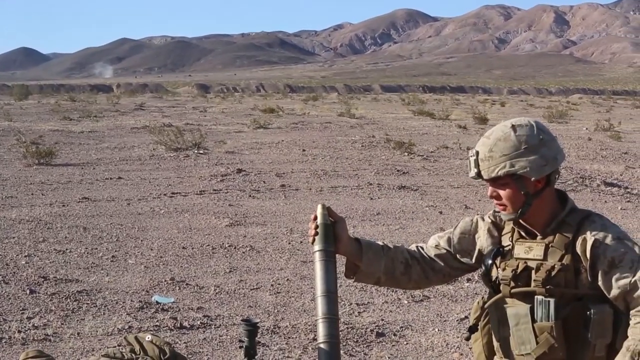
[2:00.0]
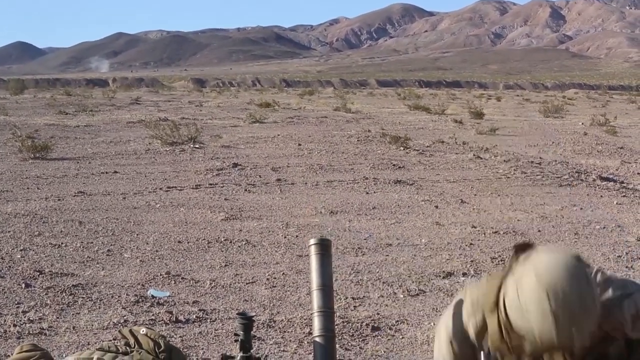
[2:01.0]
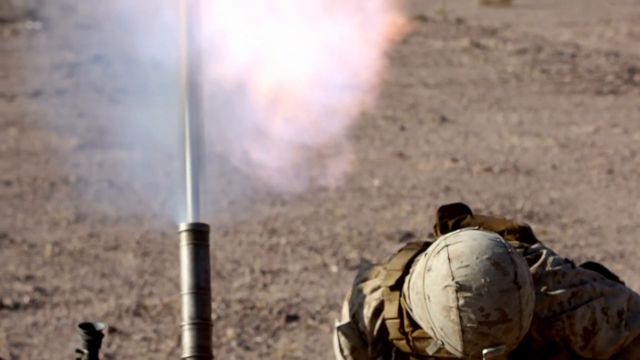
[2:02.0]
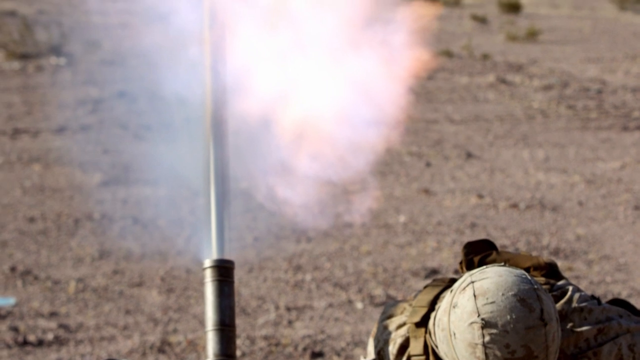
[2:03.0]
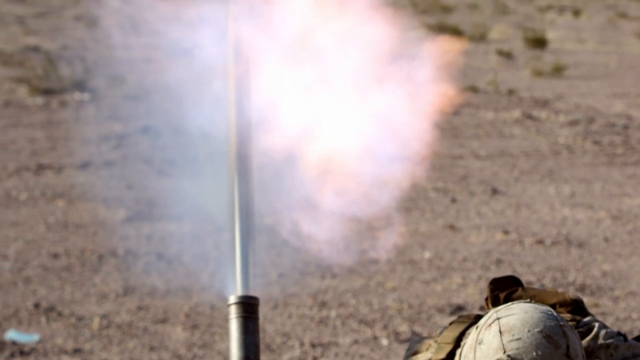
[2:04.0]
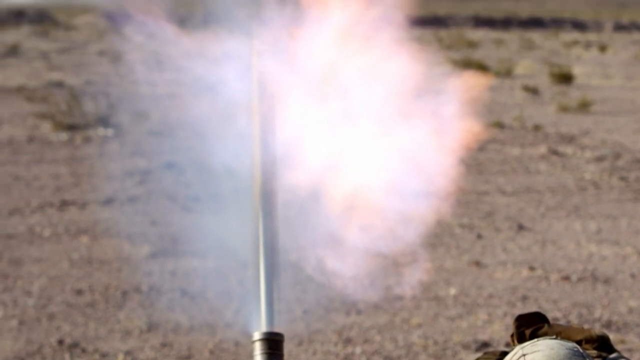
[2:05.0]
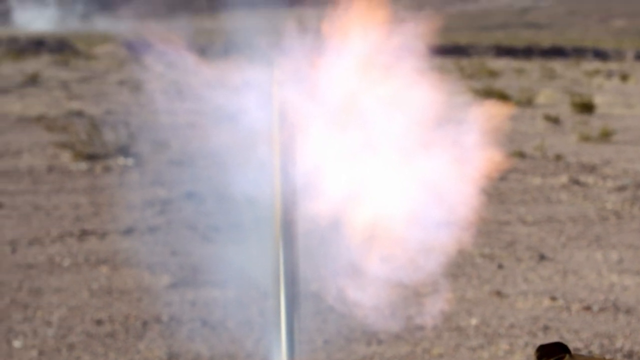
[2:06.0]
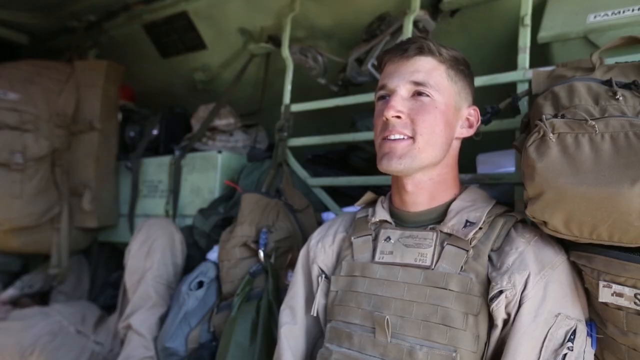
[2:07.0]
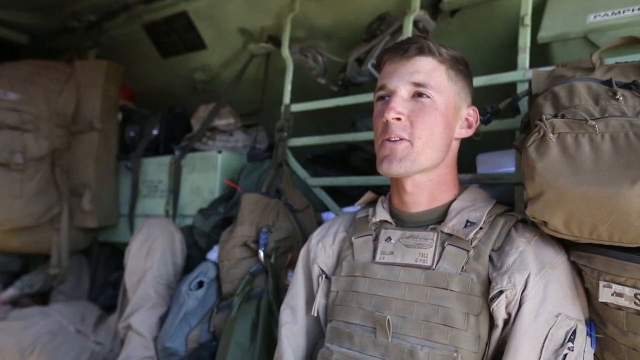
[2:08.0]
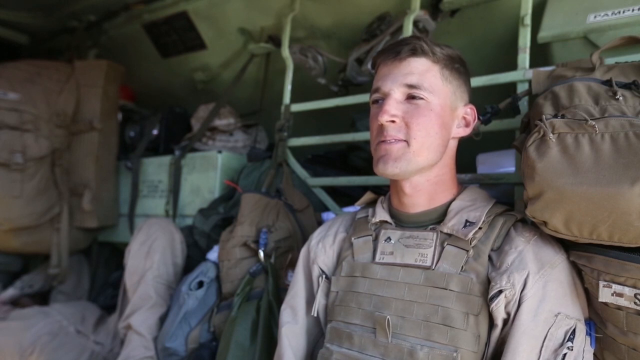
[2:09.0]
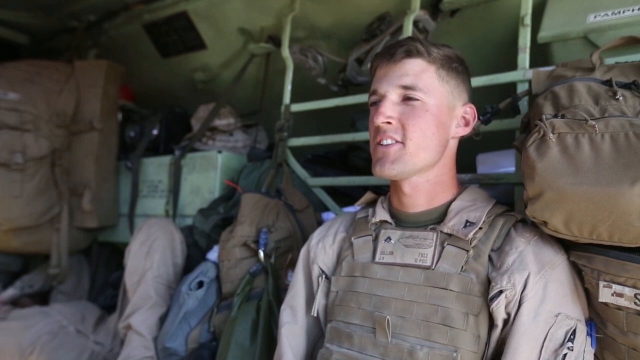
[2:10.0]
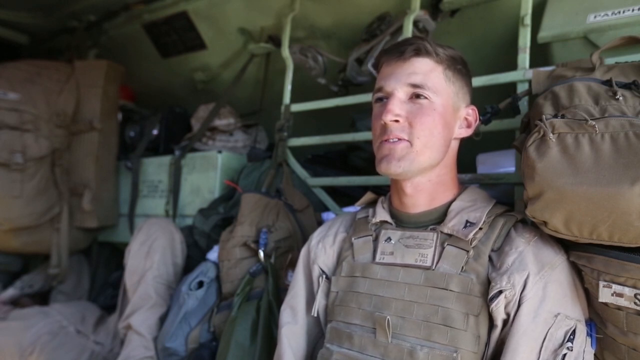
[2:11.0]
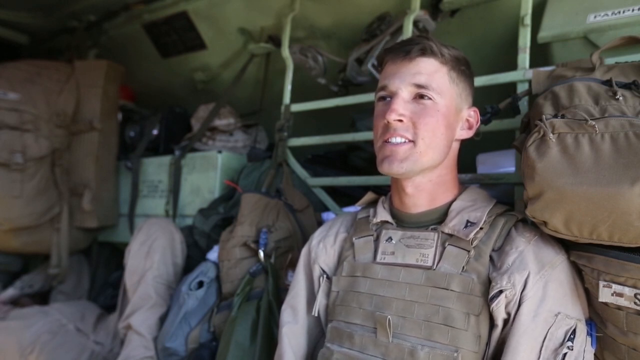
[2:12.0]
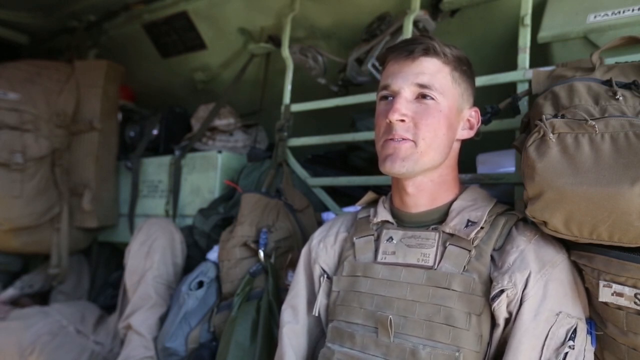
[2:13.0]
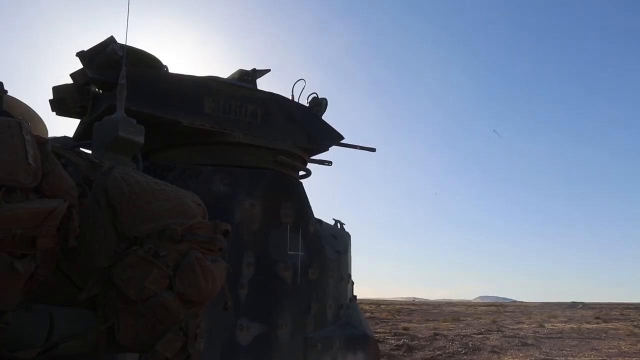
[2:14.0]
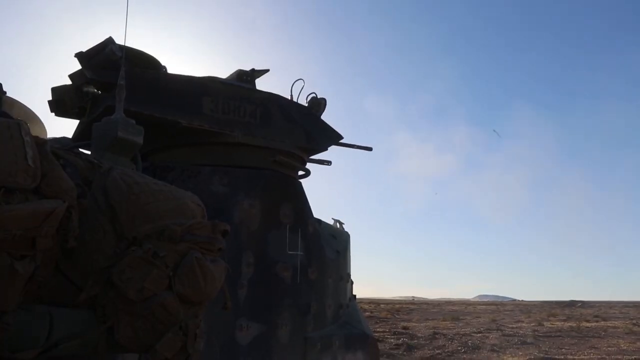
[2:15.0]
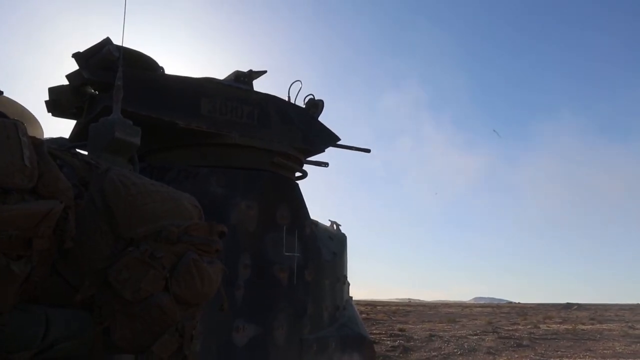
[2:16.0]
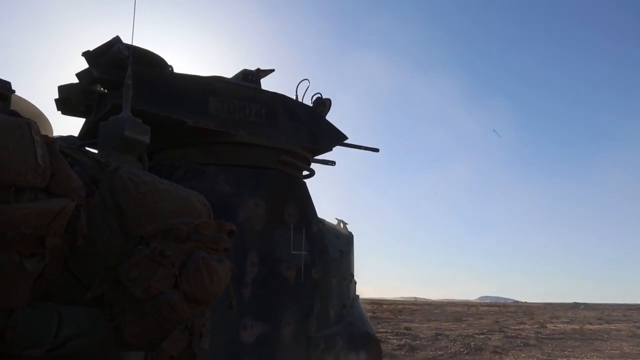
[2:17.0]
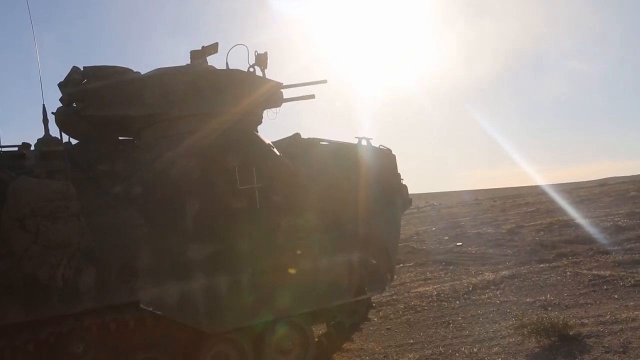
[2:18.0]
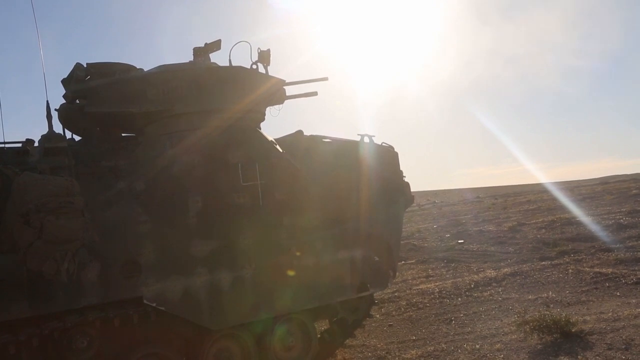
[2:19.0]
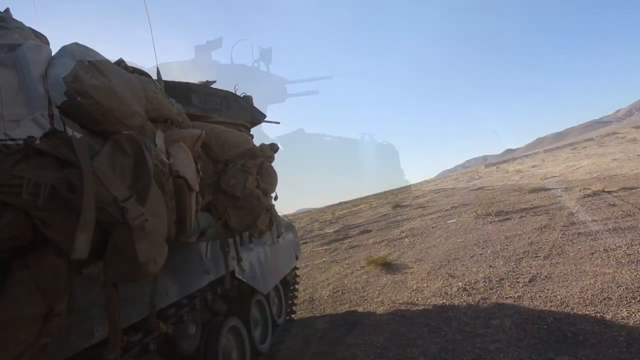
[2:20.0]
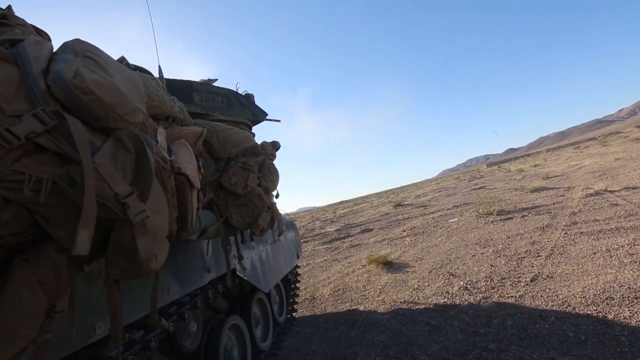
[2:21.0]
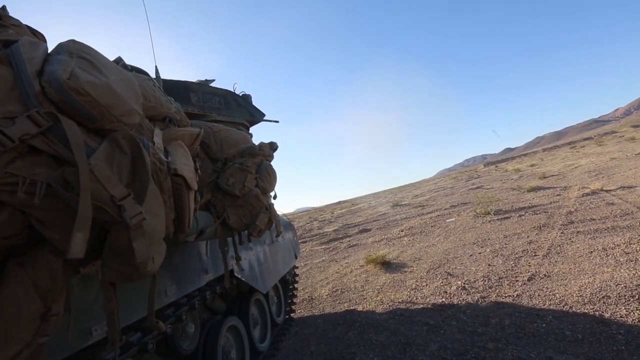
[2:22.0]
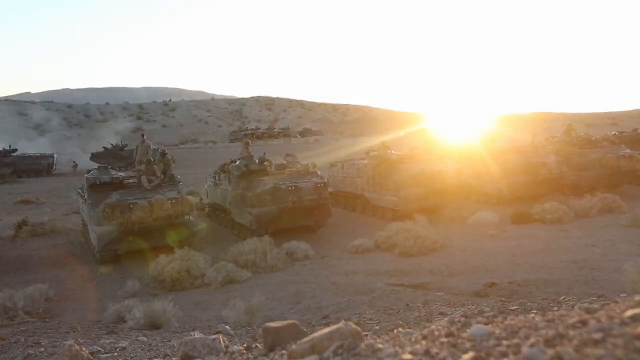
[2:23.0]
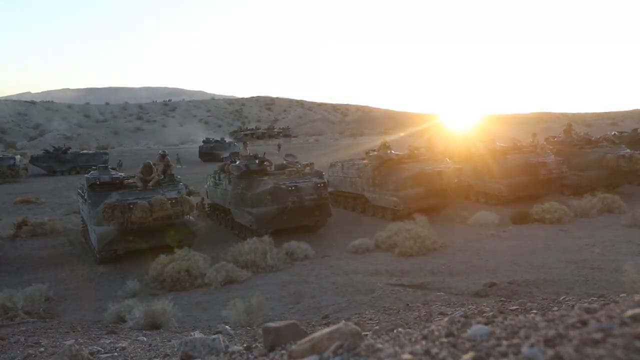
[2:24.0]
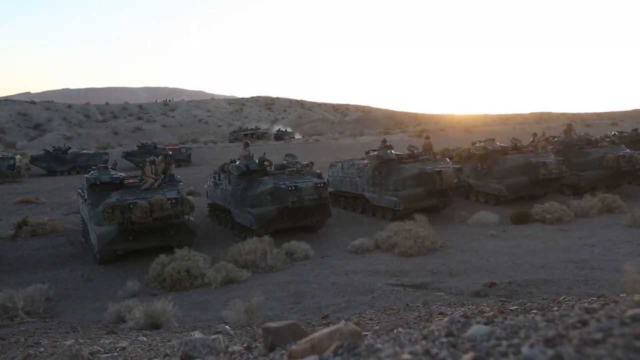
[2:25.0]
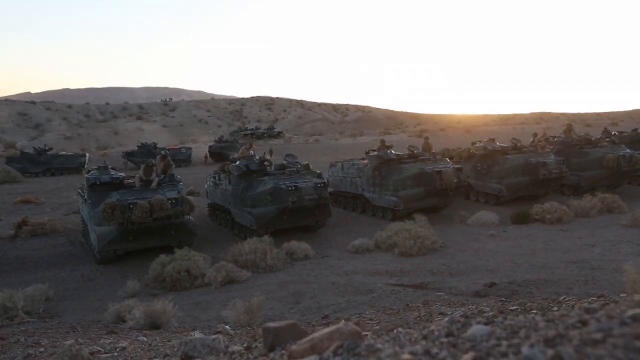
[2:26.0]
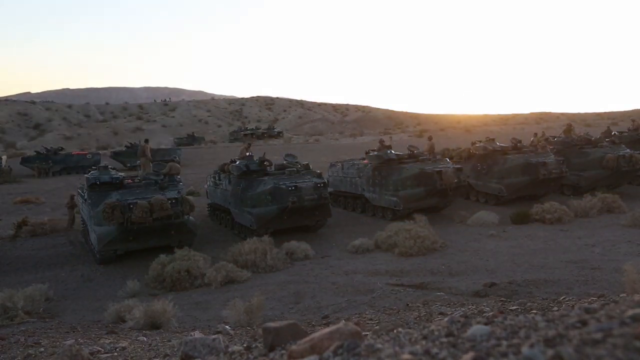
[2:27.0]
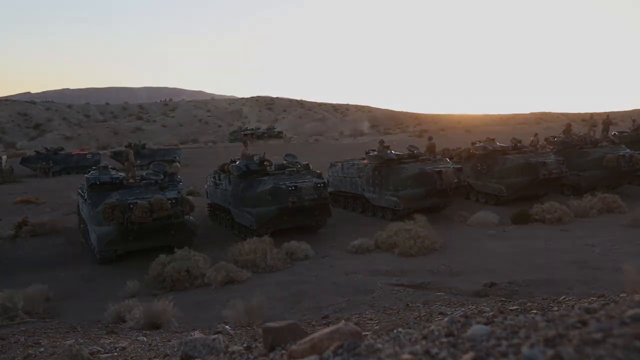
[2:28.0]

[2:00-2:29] The soldier finishes putting the object down the barrel, which turns out to be some kind of weapon: a couple of seconds later he shields himself by leaning downward, and some kind of projectile launches out of the scope into the sky, with what looks like an explosion coming out. The video cuts back to the soldier being interviewed. He speaks with a smile on his face, looks around a bit toward his right, and then continues looking directly at the person interviewing him off camera, toward the left side of the frame. The video then cuts to rounds being fired from one of the tanks, seen from the side; the barrels of the guns on the tanks sort of move in and out as they fire. Similar shots of rounds being fired from the tank's barrels follow from different angles.